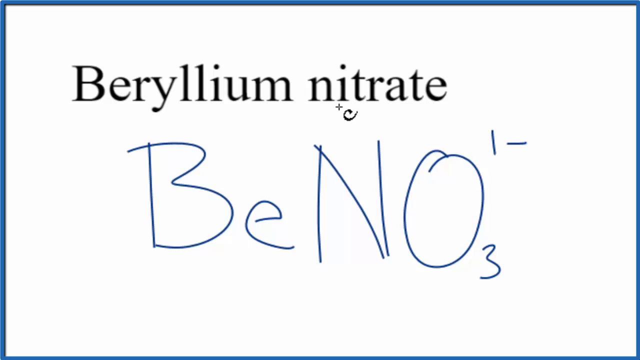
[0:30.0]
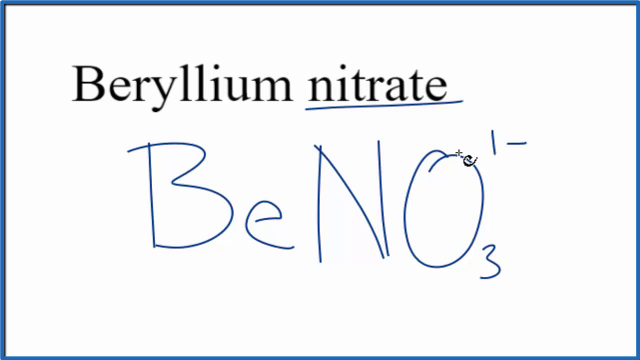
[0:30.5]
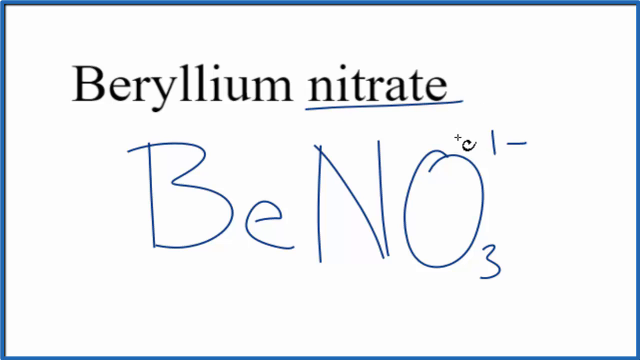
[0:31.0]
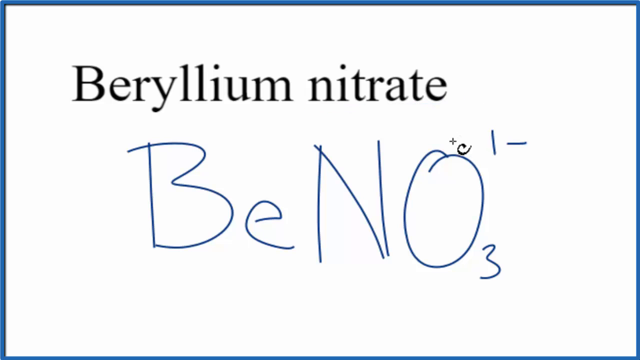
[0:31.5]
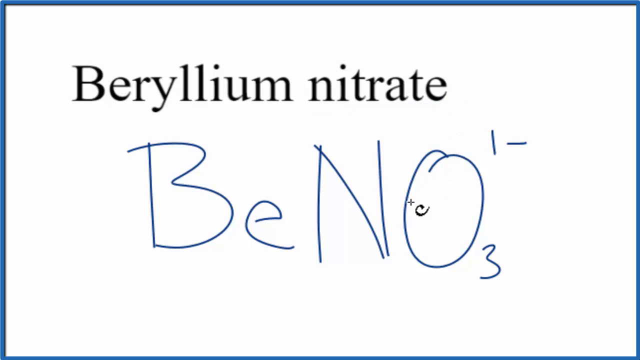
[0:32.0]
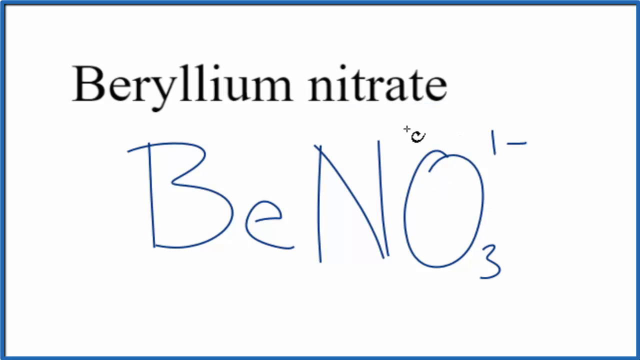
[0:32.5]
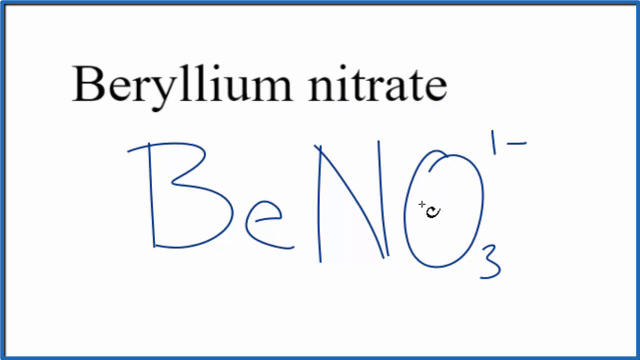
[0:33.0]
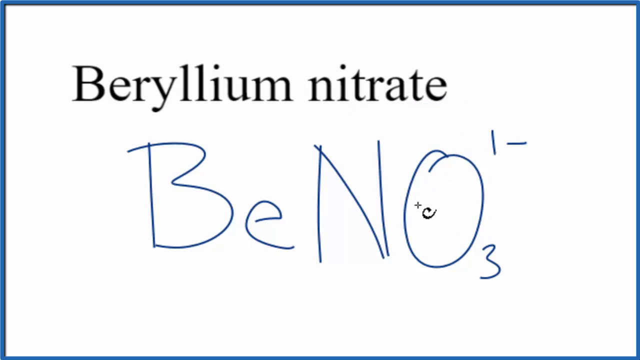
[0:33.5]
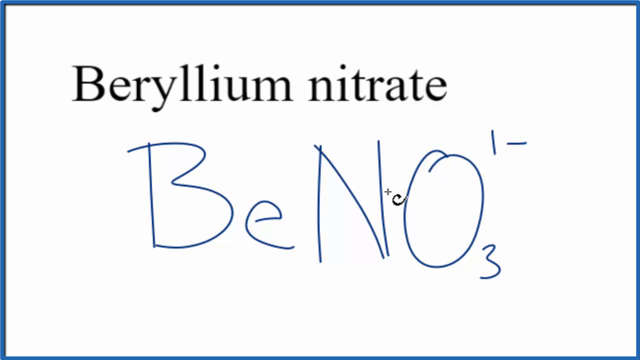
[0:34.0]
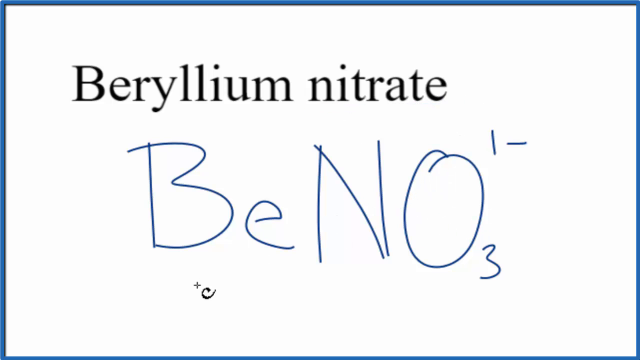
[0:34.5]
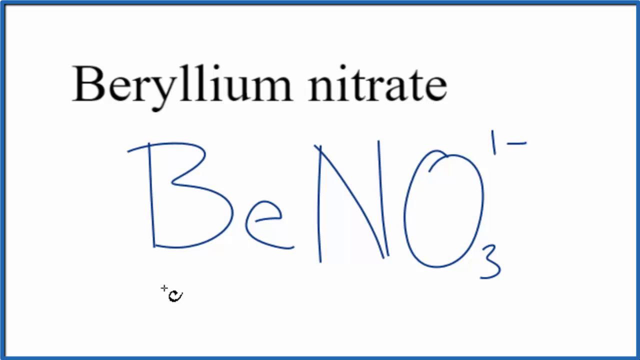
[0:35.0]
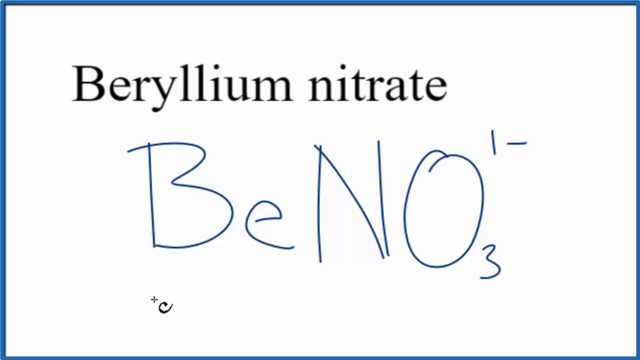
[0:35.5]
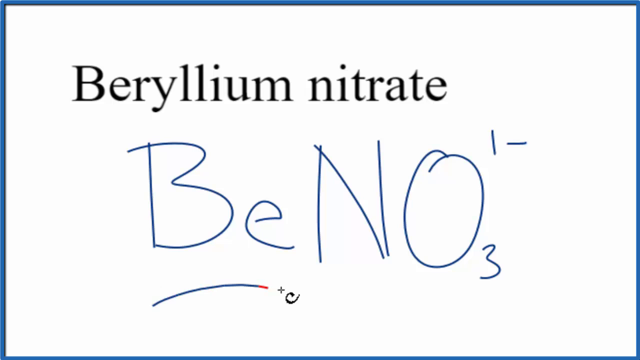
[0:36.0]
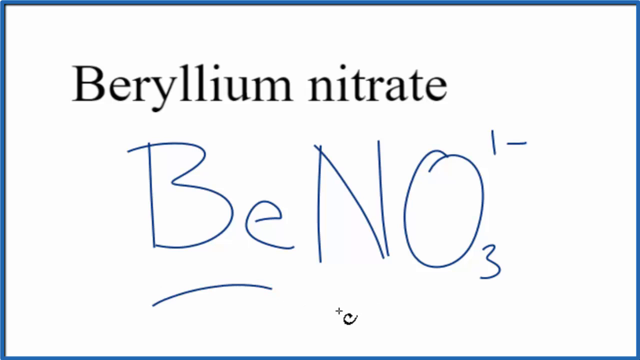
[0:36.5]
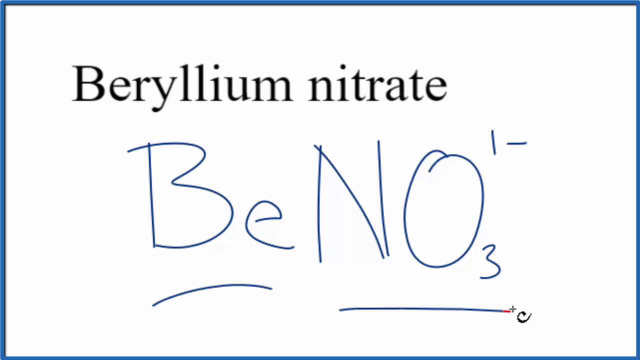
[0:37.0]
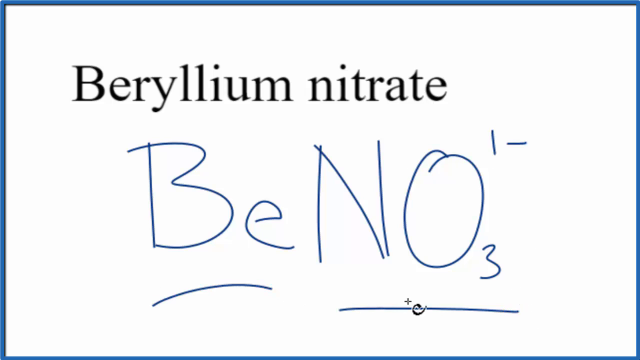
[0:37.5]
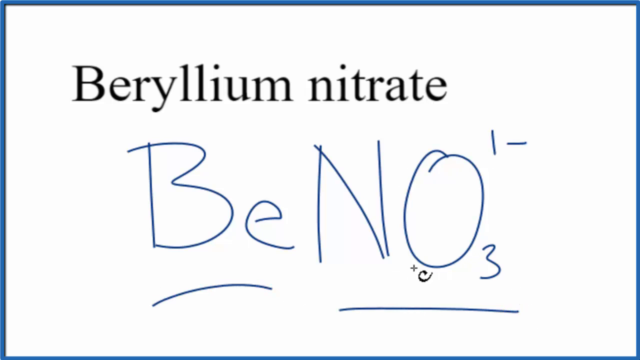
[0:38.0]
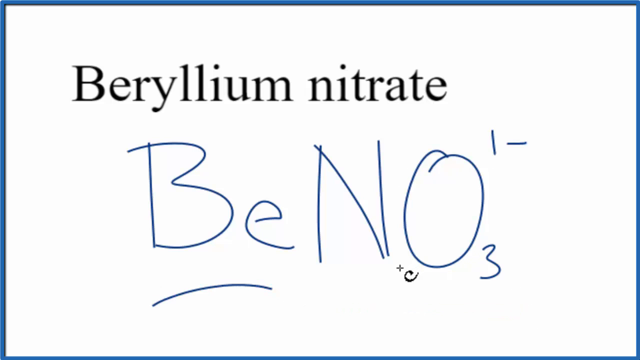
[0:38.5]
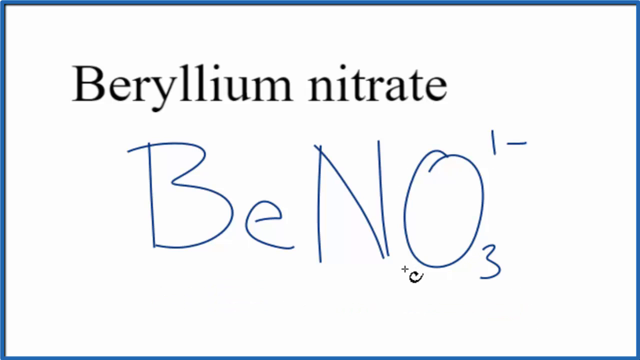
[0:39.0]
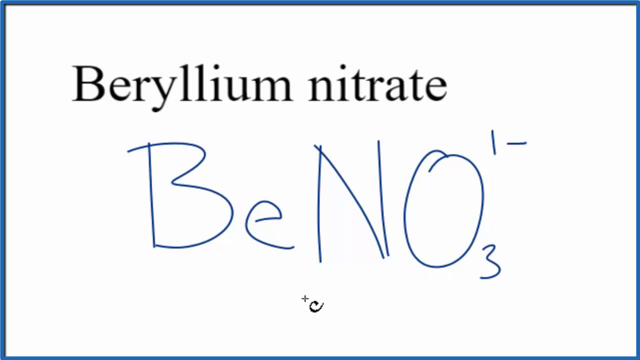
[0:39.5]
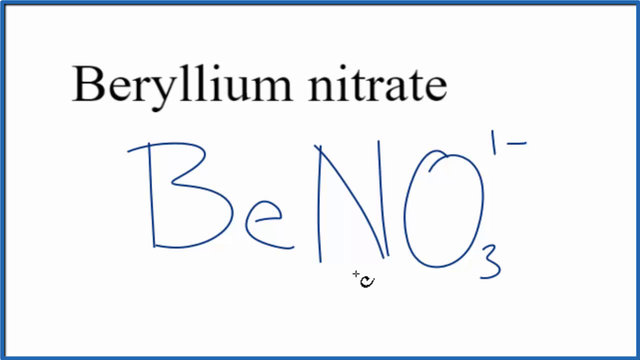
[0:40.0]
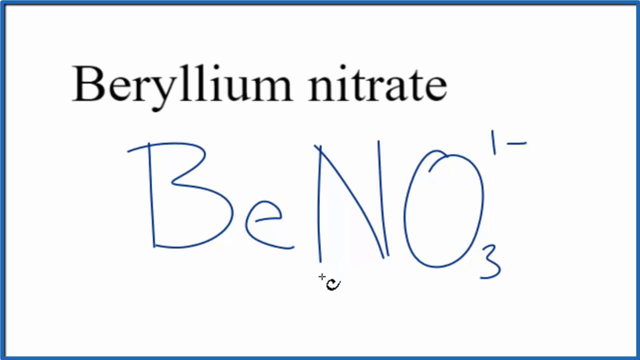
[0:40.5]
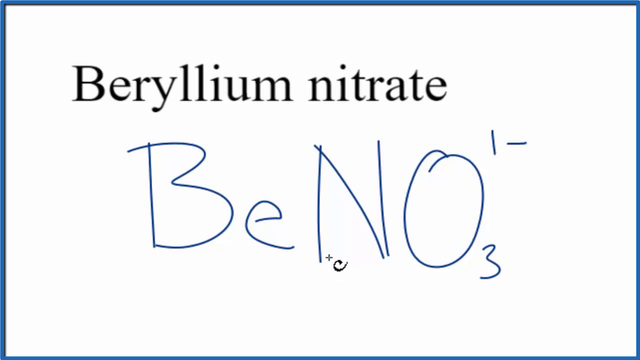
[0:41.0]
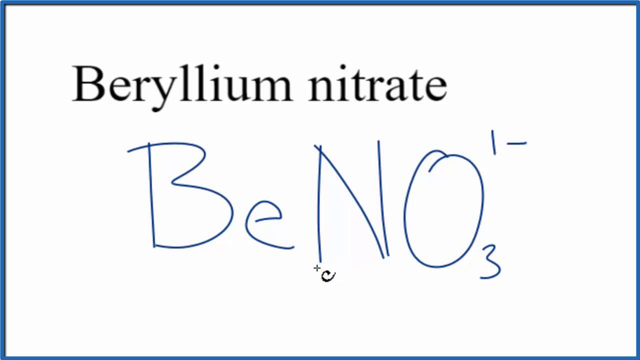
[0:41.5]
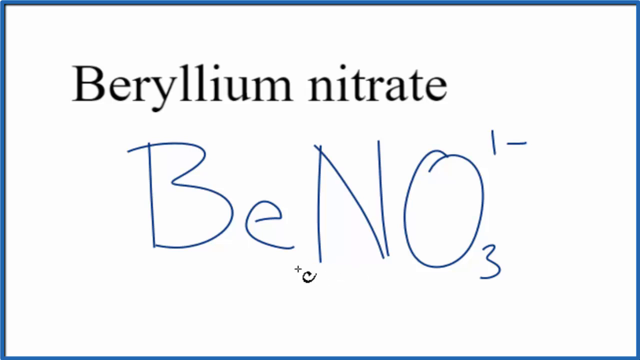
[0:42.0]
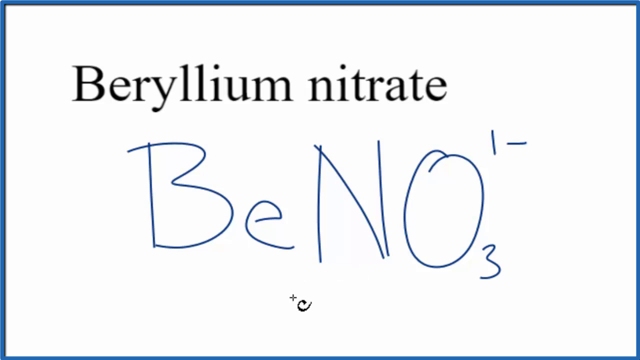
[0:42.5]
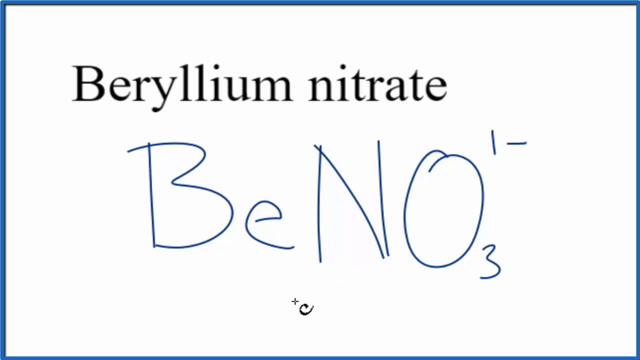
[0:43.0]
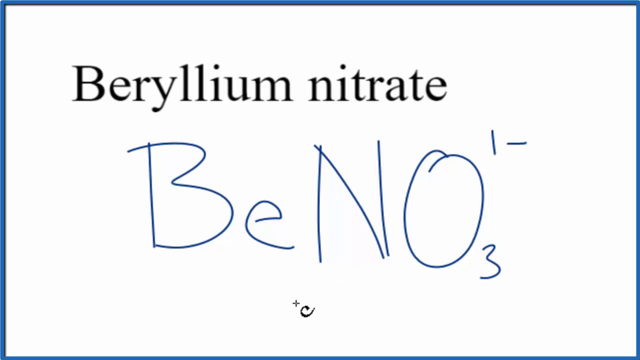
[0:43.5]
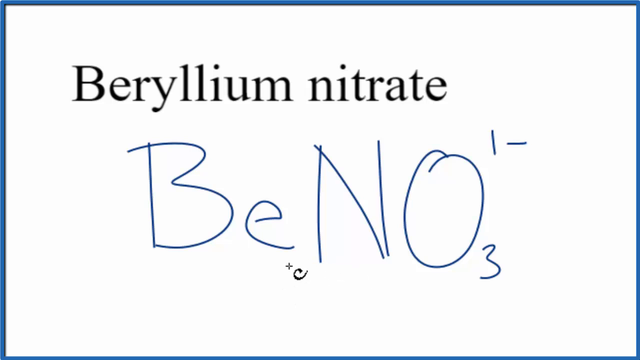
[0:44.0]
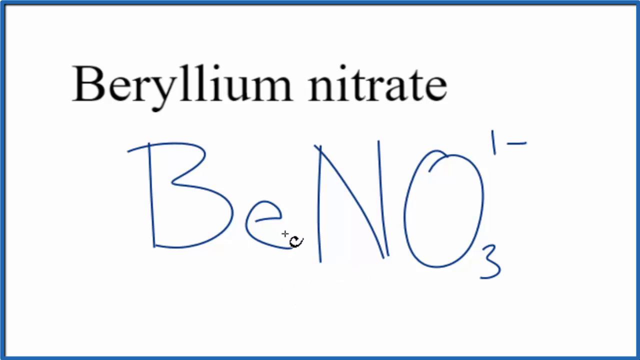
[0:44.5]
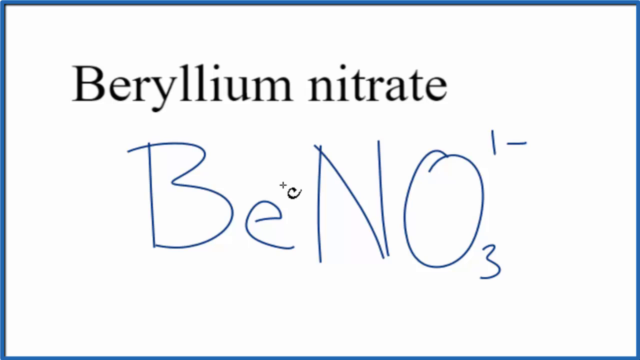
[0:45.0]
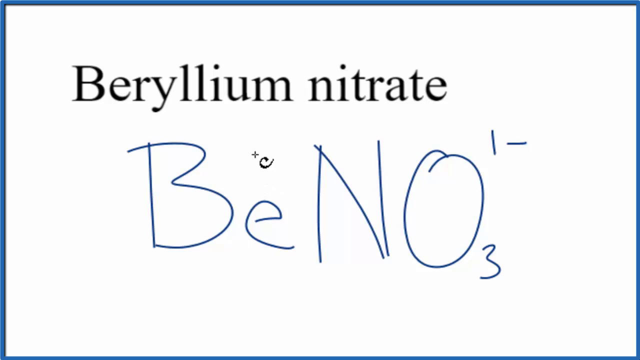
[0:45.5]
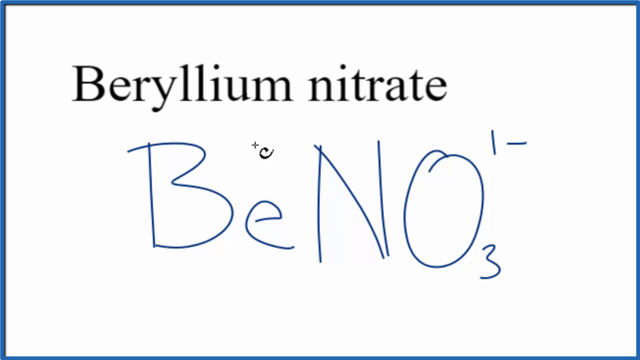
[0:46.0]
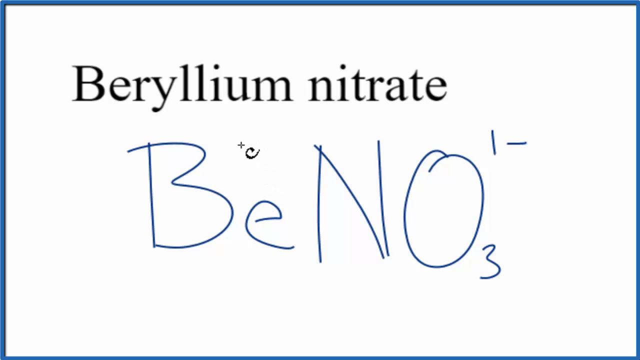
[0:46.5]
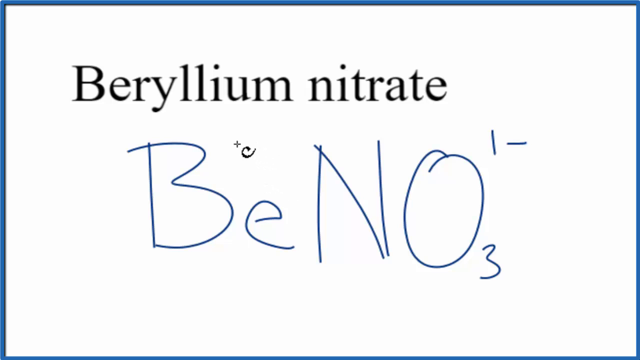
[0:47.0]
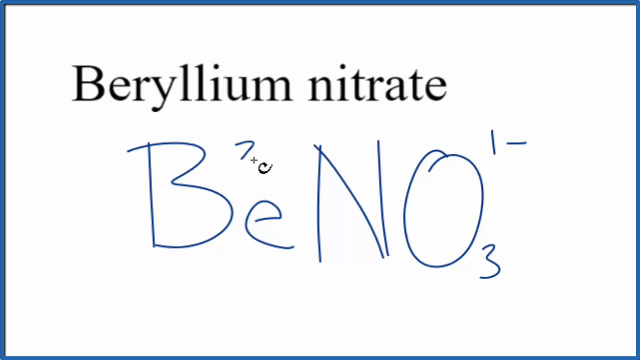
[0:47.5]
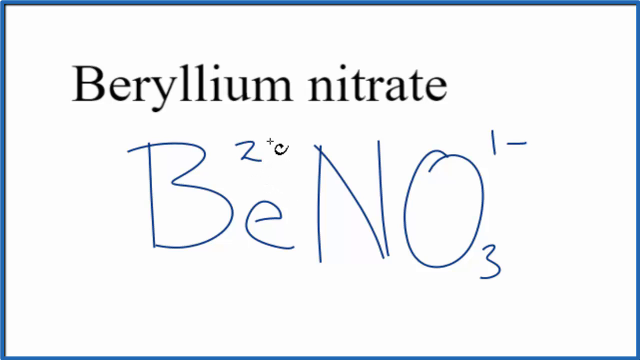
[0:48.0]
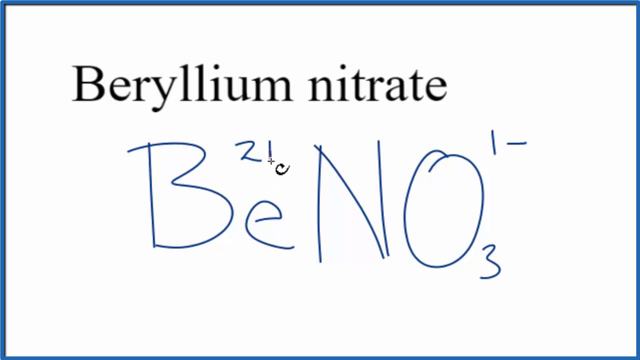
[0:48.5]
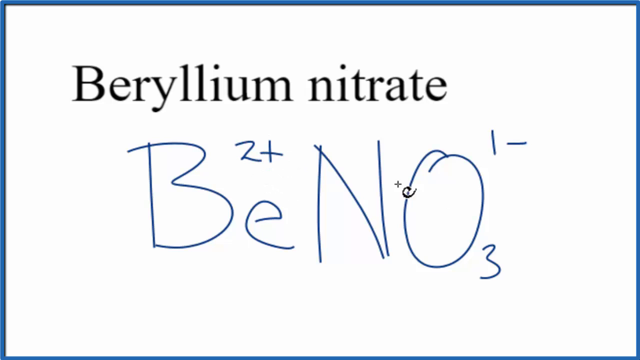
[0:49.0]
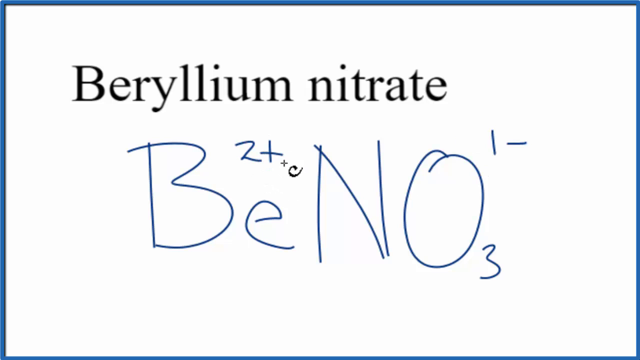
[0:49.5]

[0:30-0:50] A white screen has a black to gray gradient at the bottom. The words "beryllium nitrate" appear and the gradient disappears. A cursor that looks vaguely like a C or a comet pops in and underlines "beryllium" with a wavy line and "nitrate" with a straight one. It writes BE in handwriting rather than computerized text; the B has a little extra tail and the E is not completely enclosed. It then circles the last three letters of "nitrate" and writes a very sloppy N, whose first lines are conjoined at the top with a little extra while the two lines at the bottom are not, and a sloppy O with a little bit extra. It writes a one and a dash at the top of the O and a three at the bottom, apparently indicating the third power. The cursor bounces around the screen, underlines "nitrate" again, erases the nitrate, and then underlines the BE and the NO, drawing attention to those two parts of the equation. The cursor bounces up and puts a 2+ at the top of the E. It underlines "nitrate" once more, then keeps circling around the NO without drawing any lines.